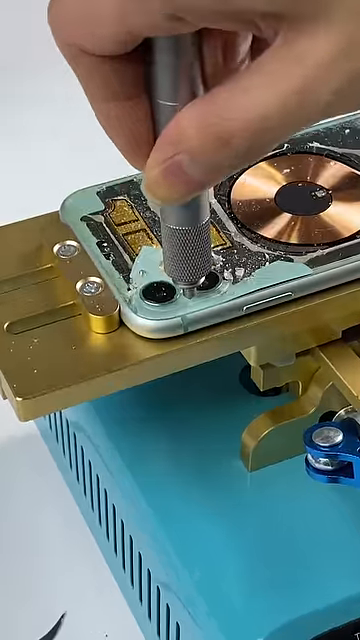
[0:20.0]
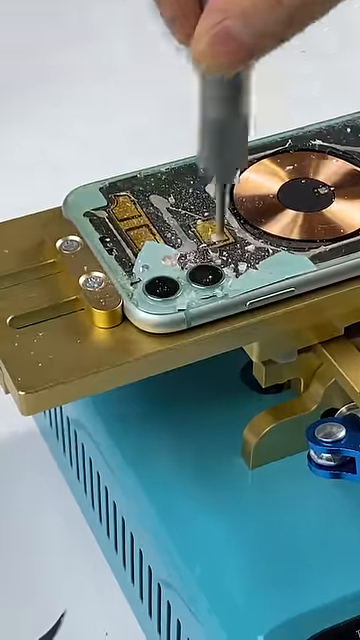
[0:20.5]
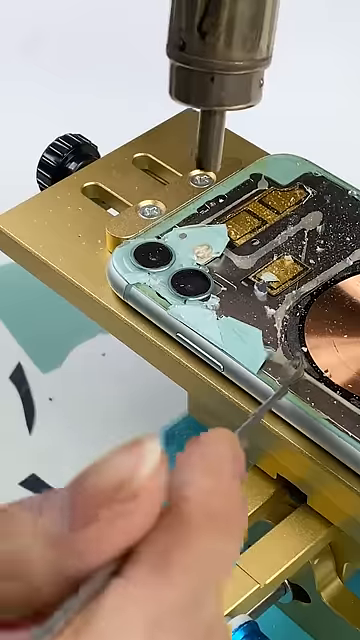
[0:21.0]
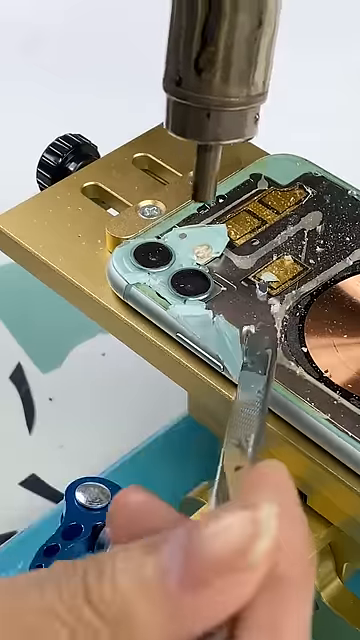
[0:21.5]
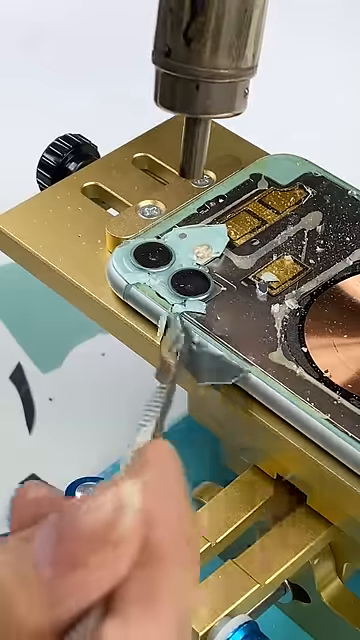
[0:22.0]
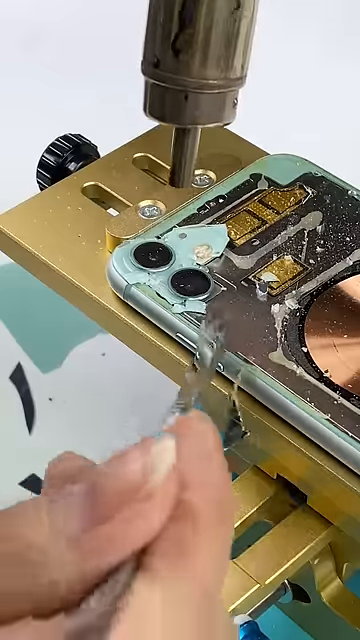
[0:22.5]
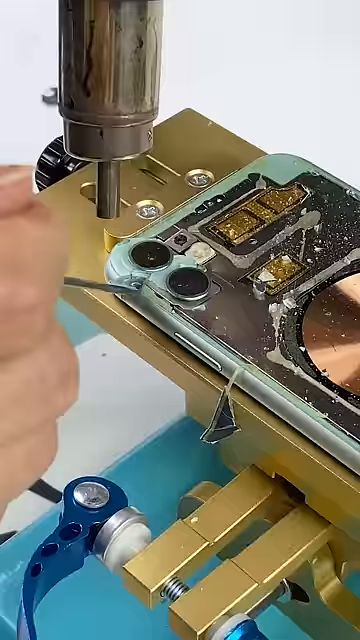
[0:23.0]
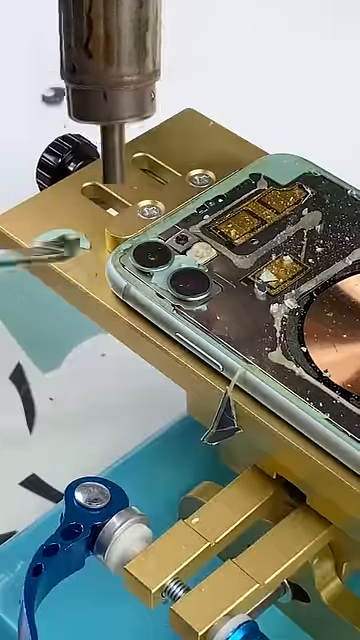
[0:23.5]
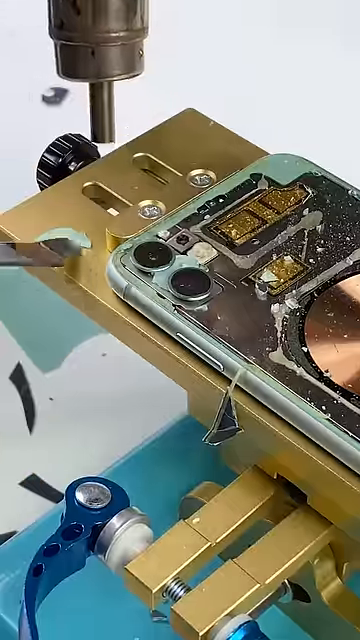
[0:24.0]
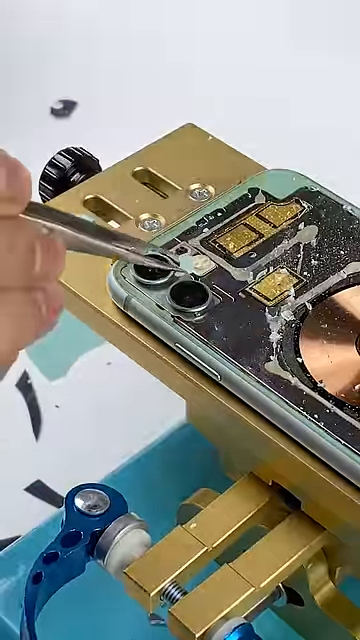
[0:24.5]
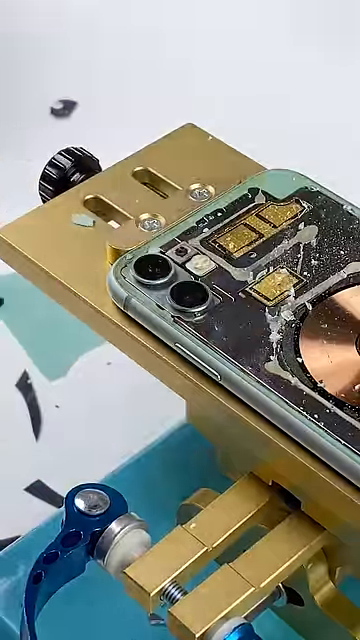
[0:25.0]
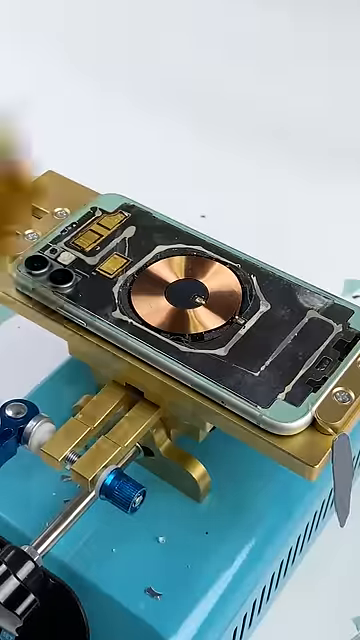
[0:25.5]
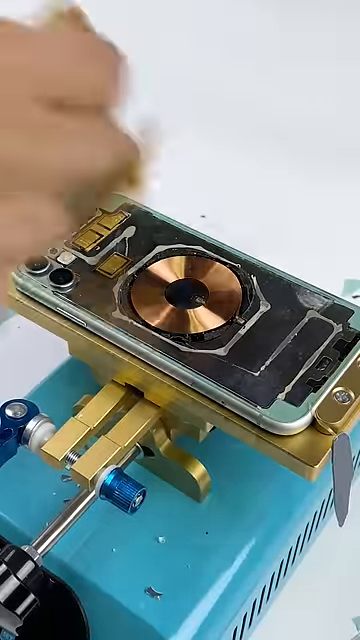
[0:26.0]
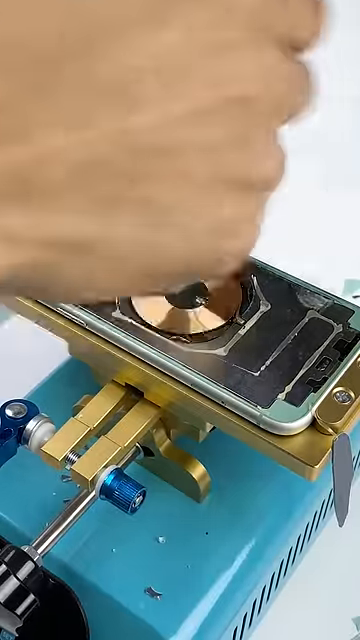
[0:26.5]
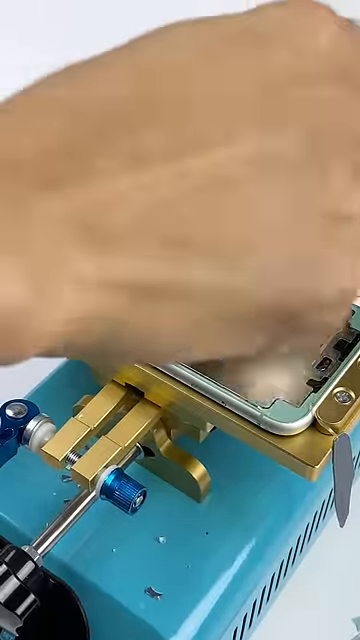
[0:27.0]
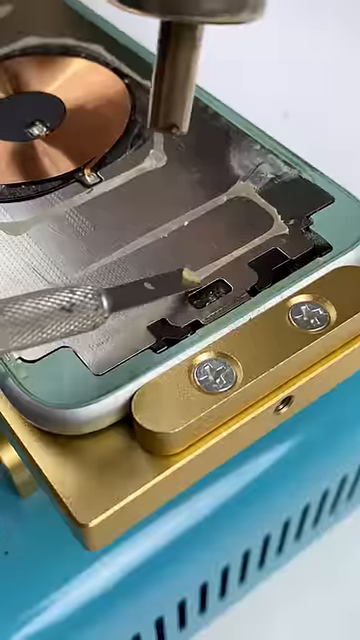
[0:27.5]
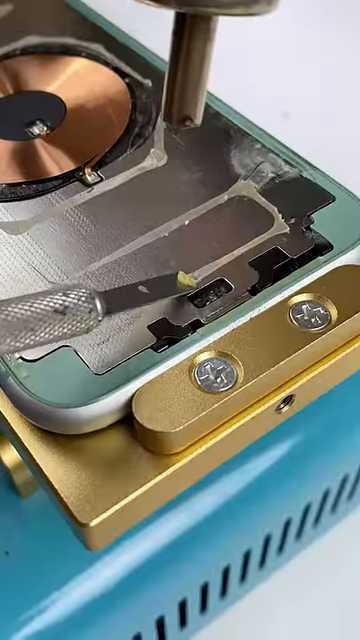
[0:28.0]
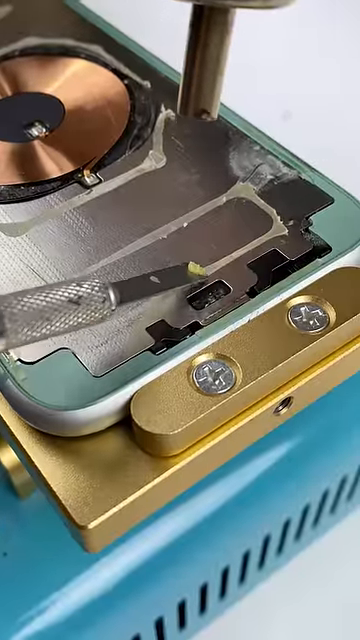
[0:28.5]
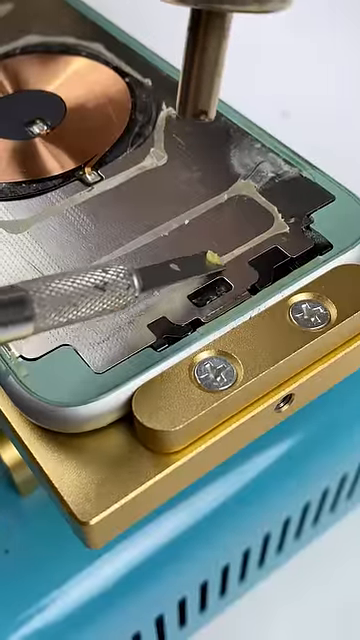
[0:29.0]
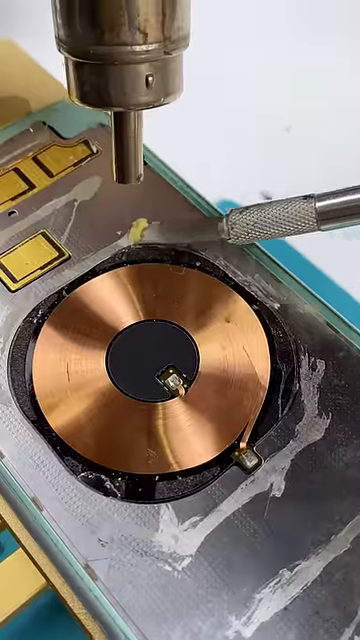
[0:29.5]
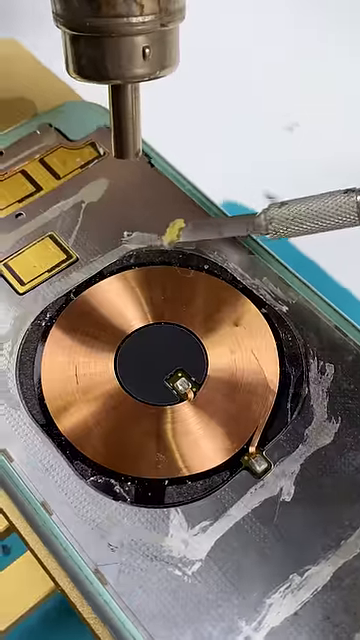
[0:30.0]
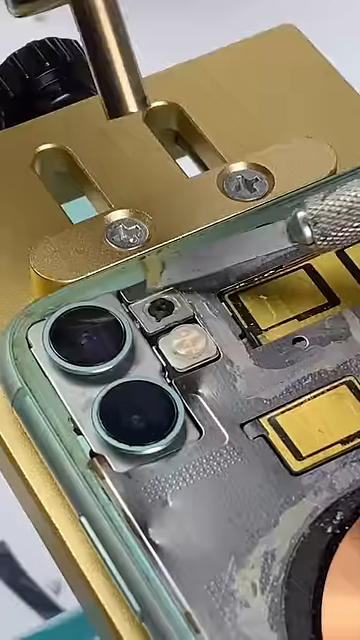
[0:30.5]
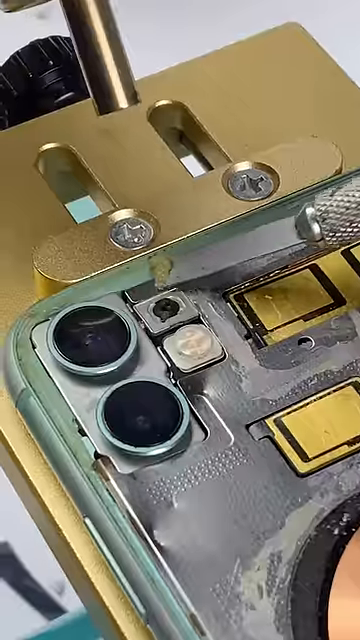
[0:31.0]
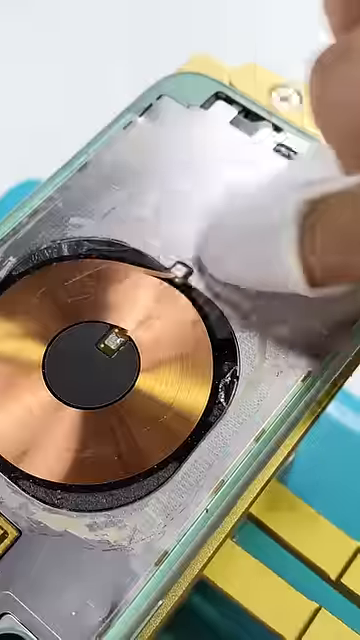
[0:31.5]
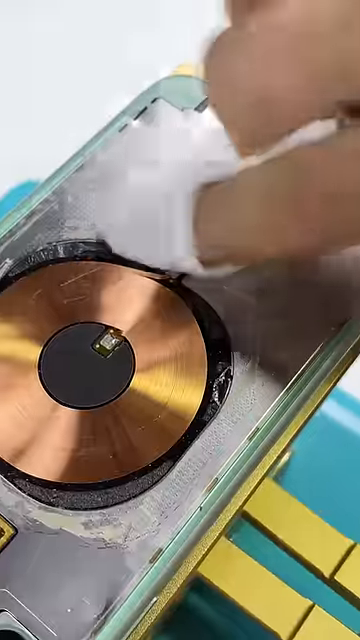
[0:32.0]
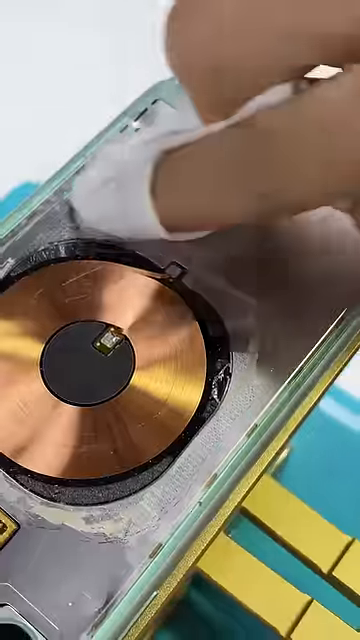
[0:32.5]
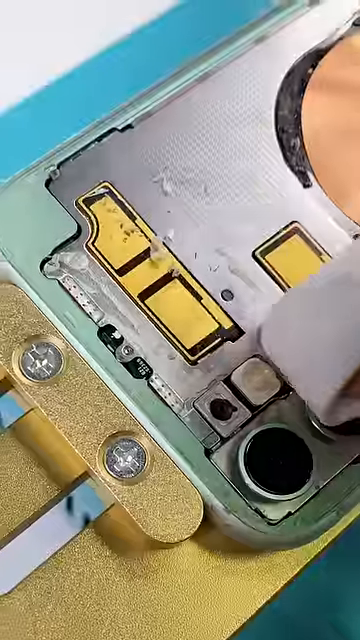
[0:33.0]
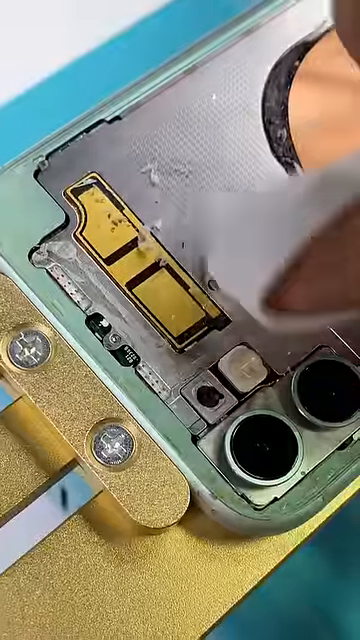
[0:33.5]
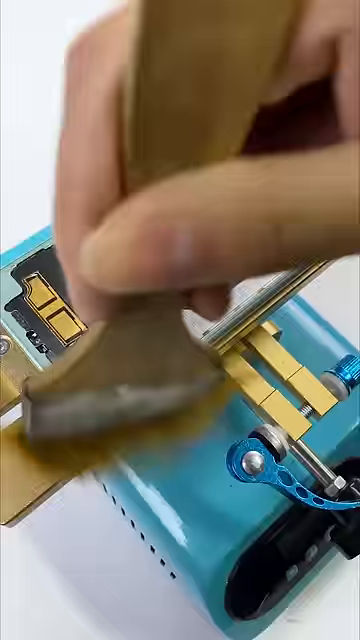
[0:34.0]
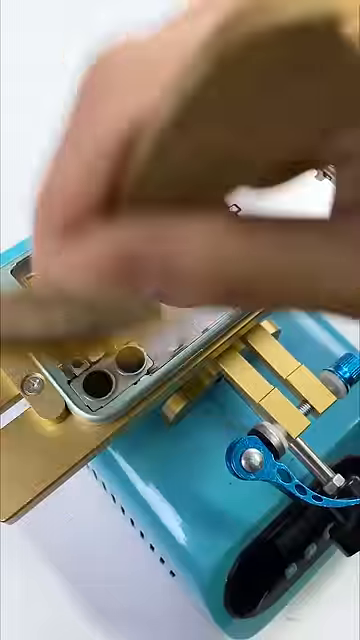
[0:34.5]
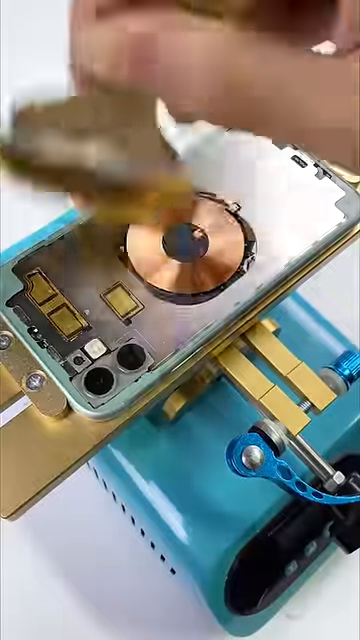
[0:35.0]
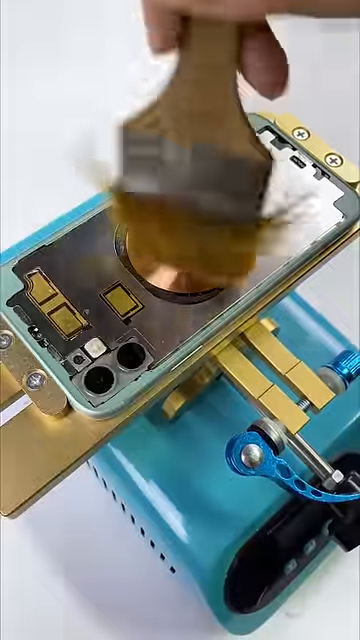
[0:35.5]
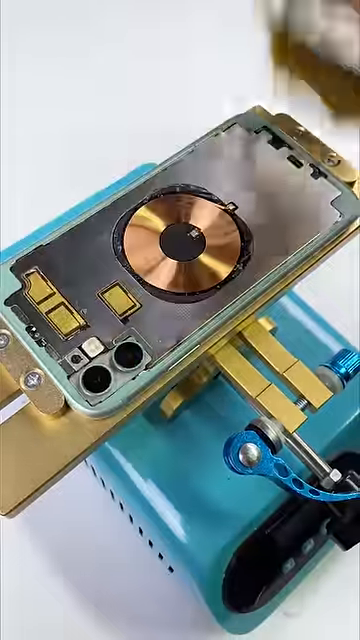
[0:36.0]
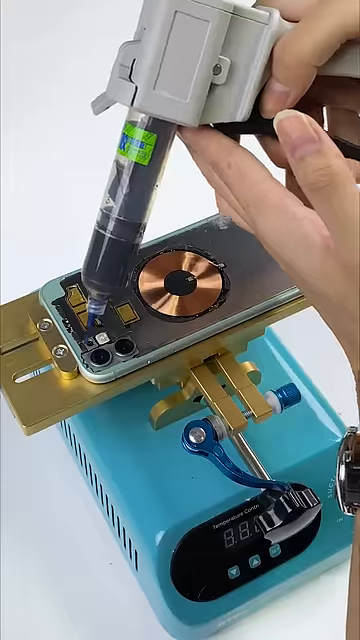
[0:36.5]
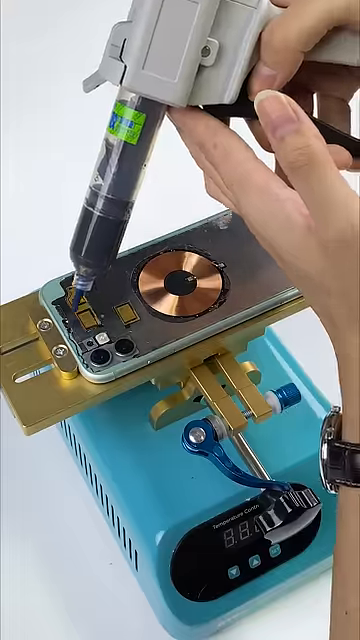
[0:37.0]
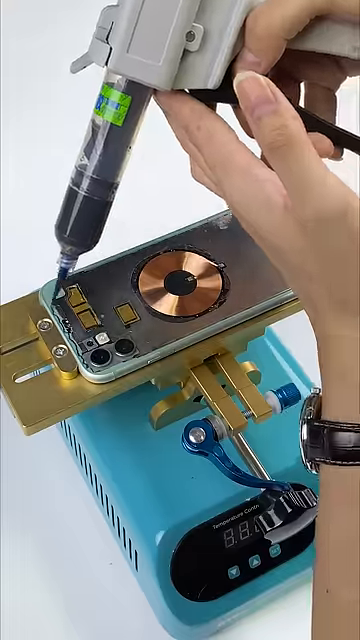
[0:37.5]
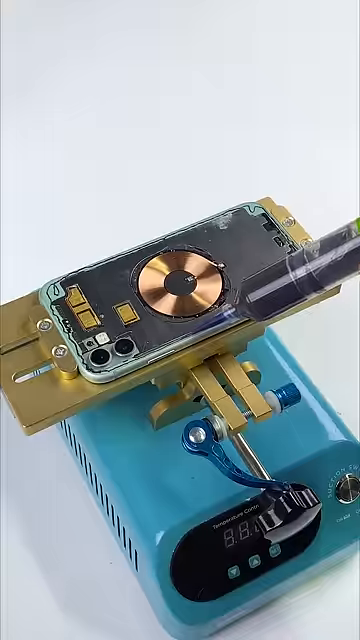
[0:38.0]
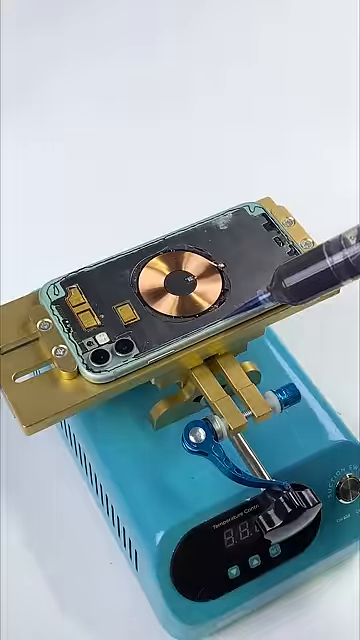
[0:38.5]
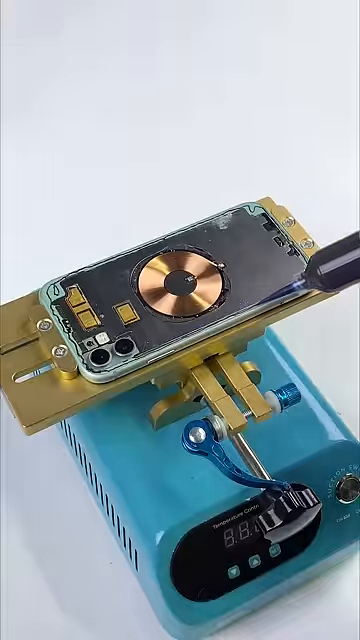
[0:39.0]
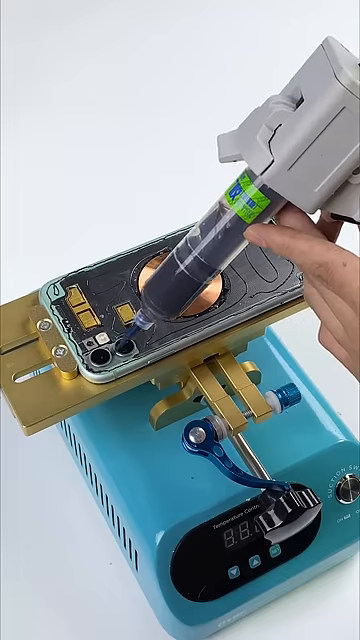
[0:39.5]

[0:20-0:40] The person continues to break the glass with a glass-breaking tool and scrape it away with tweezers. They then take a flat brush, almost like a paintbrush, and brush the phone to remove any additional glass or debris. They use the same heating agent as before, now to loosen the glue that held the glass onto the back, and while heating they scrape it with a sharp scalpel. Finally, they use a rag to buff and continue cleaning the exposed back.